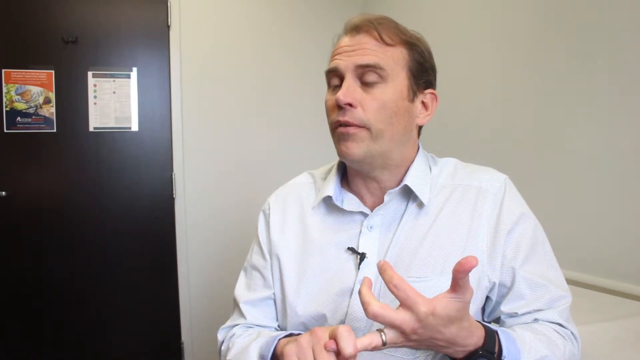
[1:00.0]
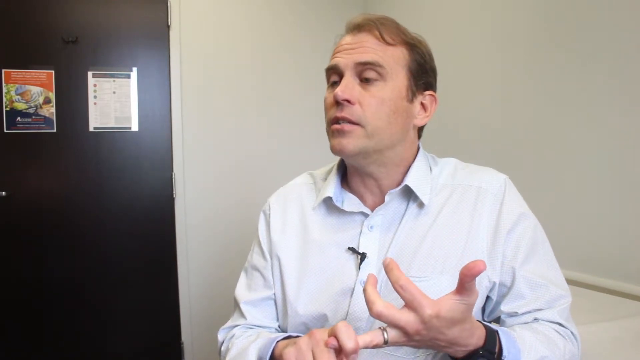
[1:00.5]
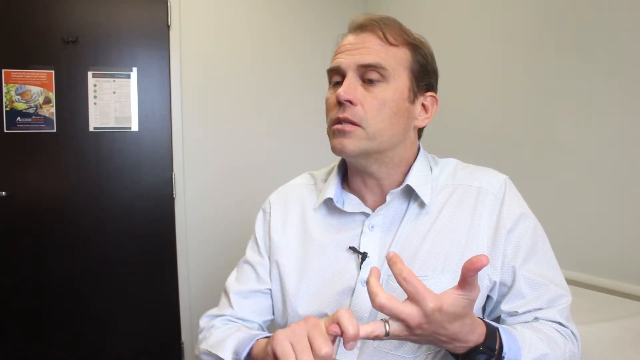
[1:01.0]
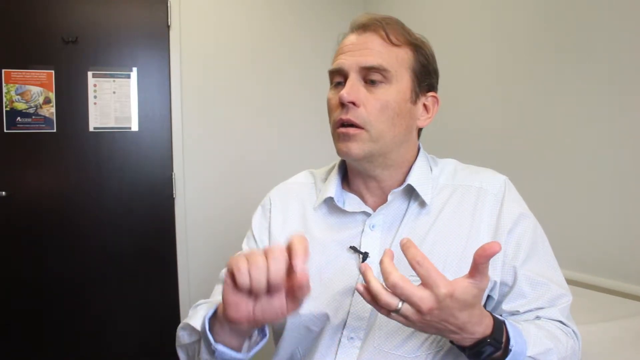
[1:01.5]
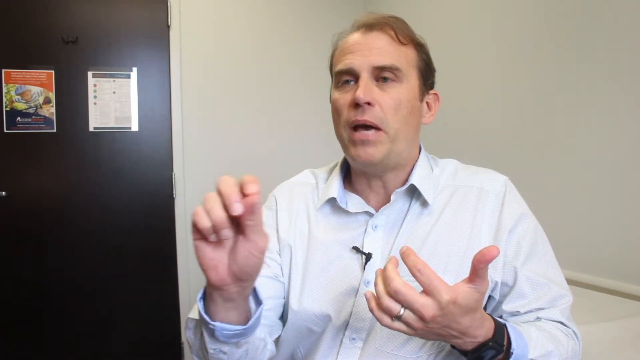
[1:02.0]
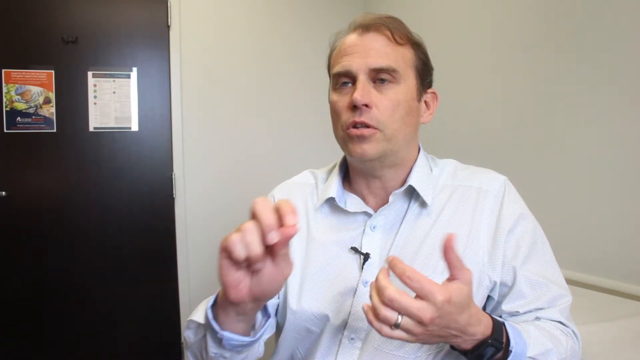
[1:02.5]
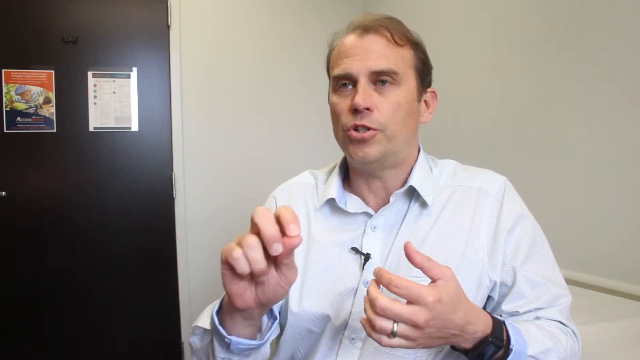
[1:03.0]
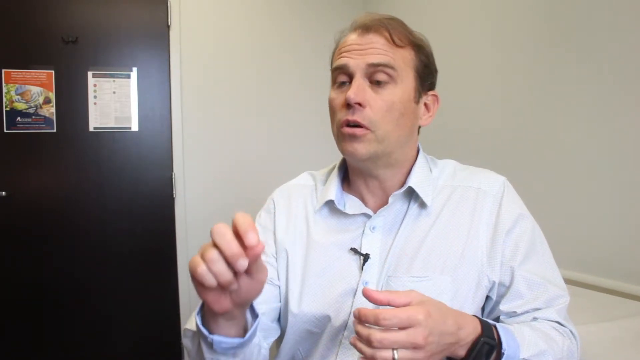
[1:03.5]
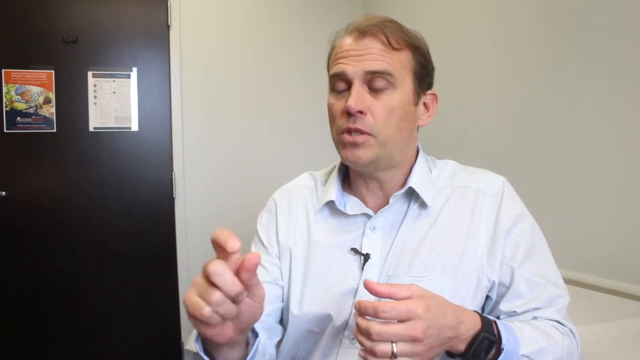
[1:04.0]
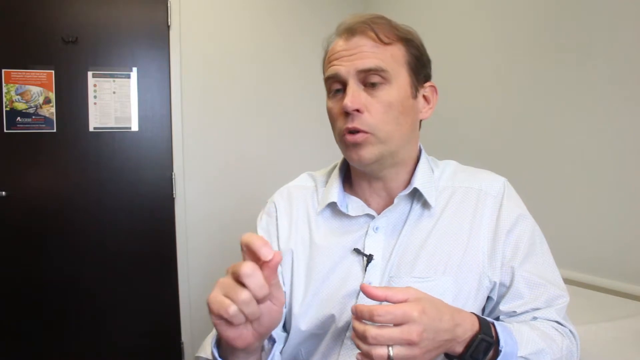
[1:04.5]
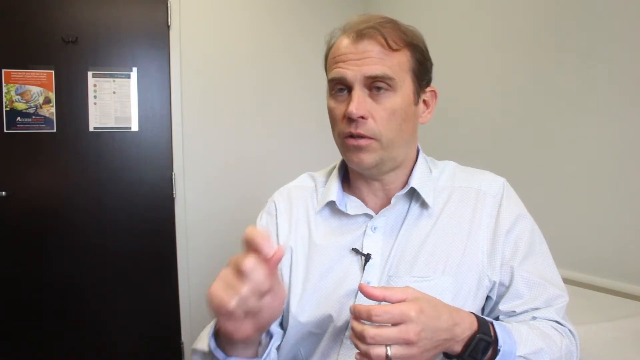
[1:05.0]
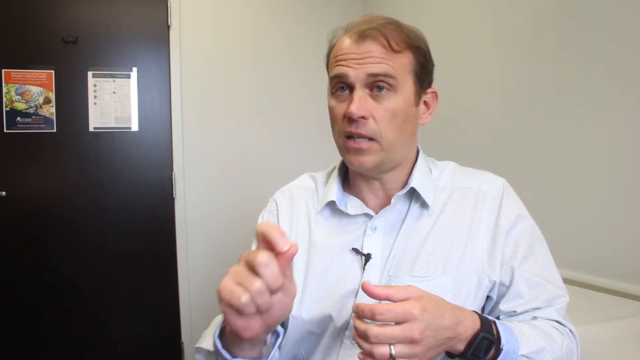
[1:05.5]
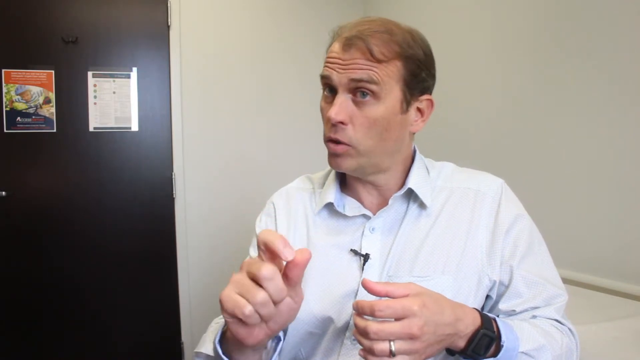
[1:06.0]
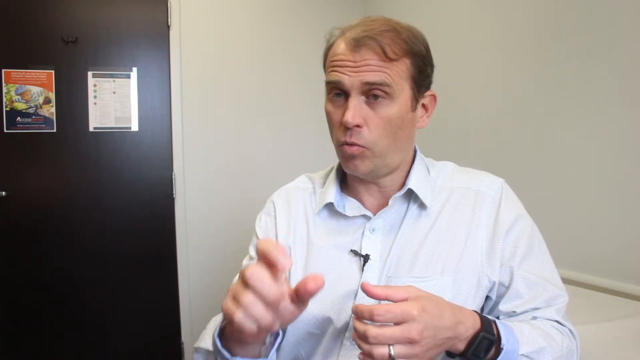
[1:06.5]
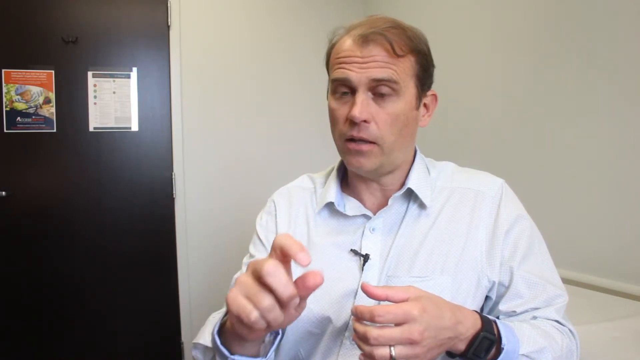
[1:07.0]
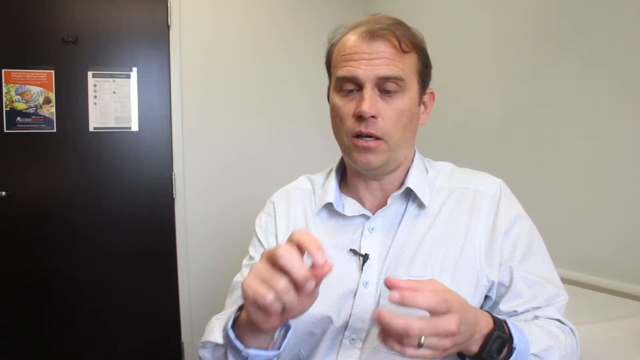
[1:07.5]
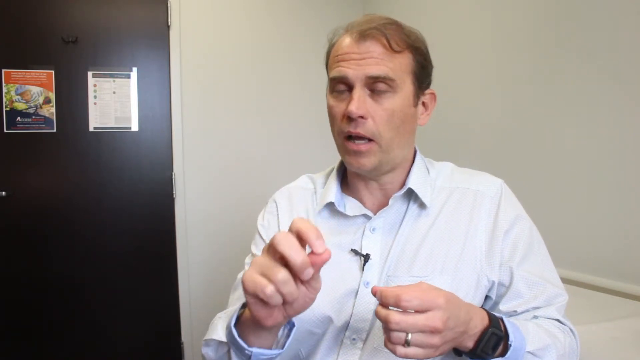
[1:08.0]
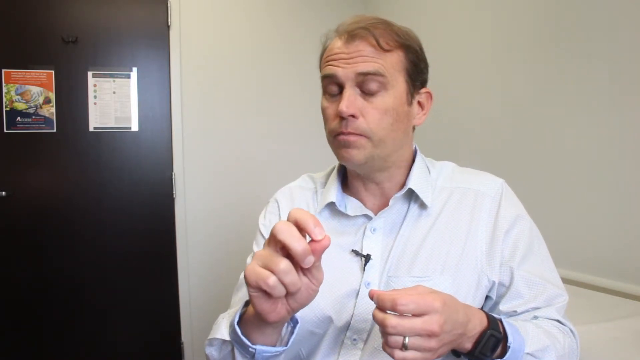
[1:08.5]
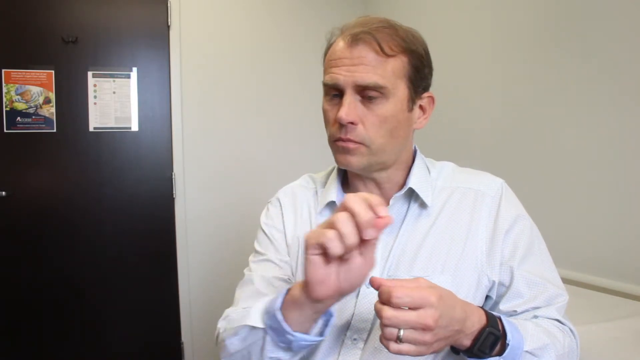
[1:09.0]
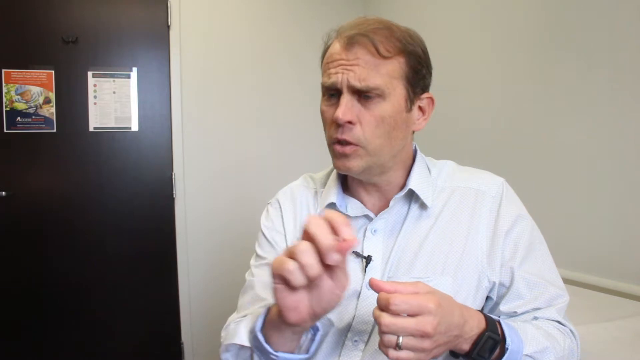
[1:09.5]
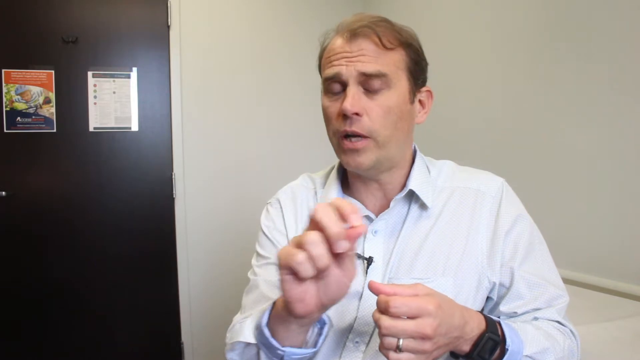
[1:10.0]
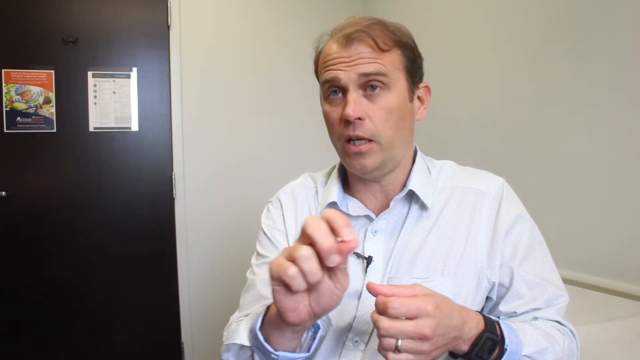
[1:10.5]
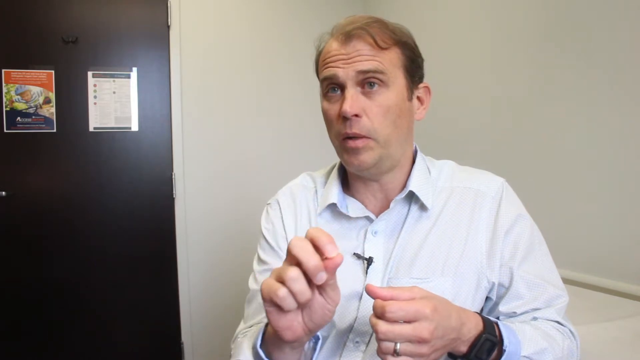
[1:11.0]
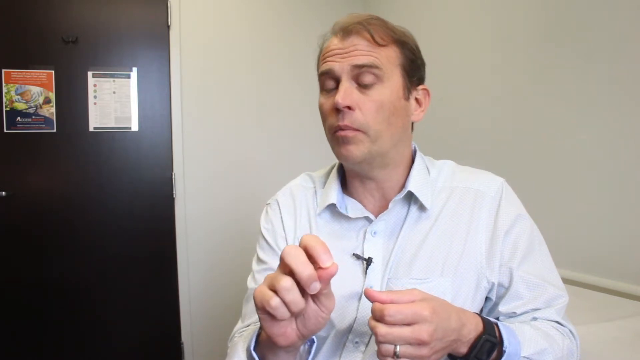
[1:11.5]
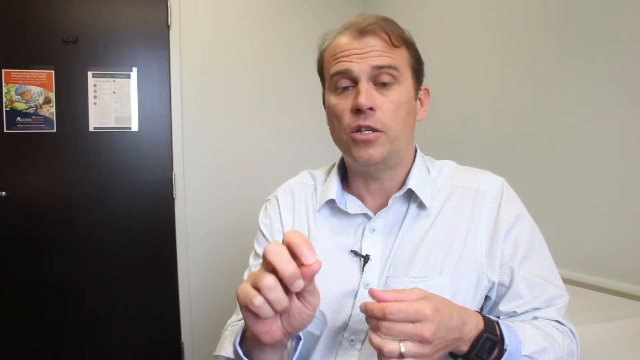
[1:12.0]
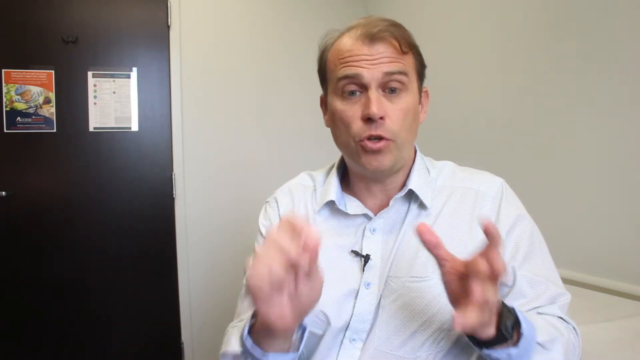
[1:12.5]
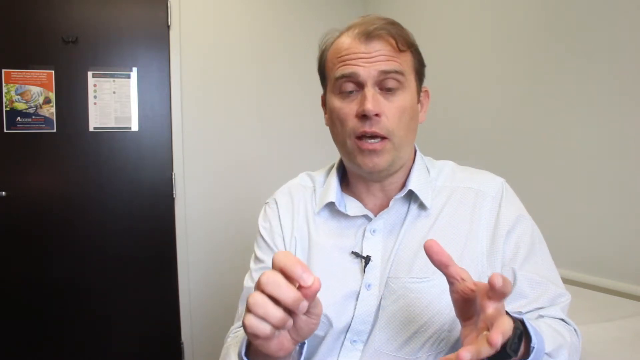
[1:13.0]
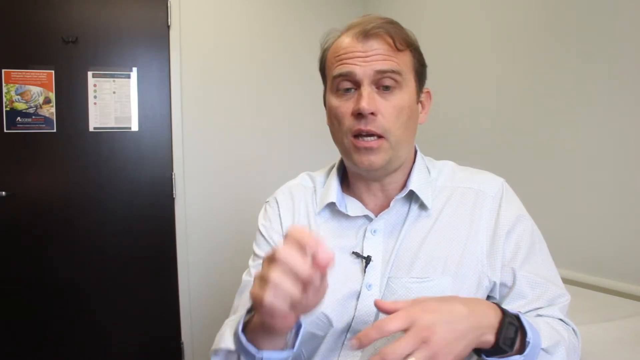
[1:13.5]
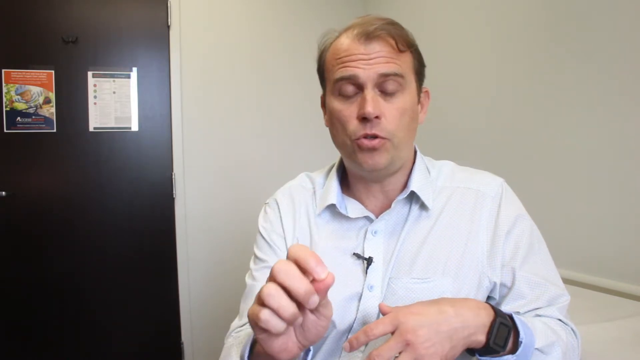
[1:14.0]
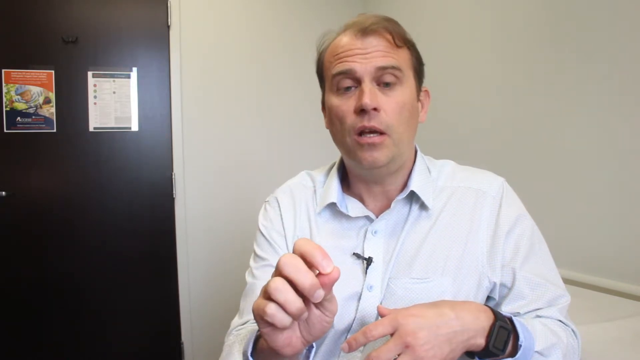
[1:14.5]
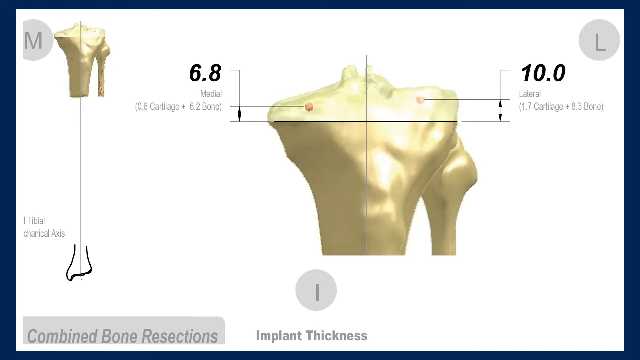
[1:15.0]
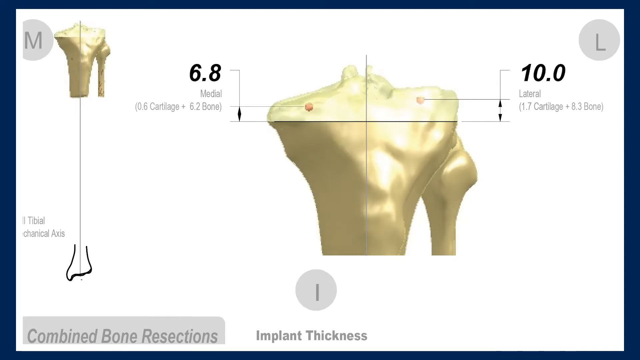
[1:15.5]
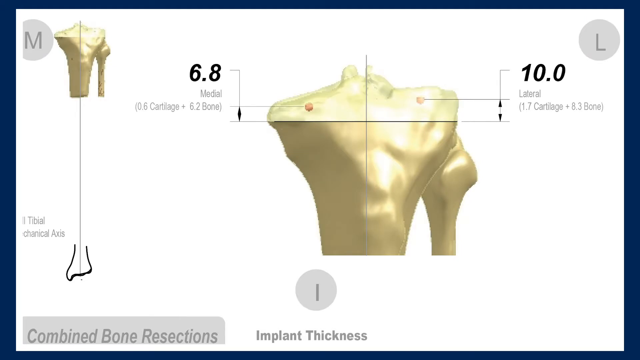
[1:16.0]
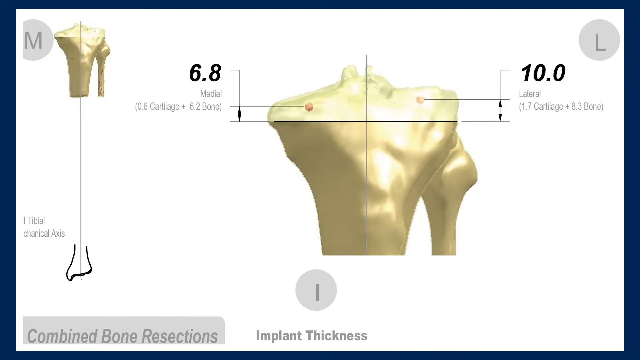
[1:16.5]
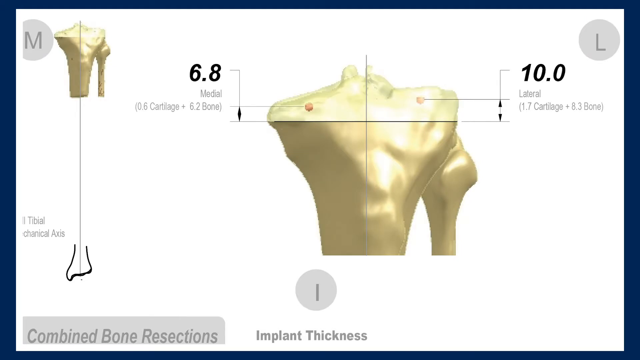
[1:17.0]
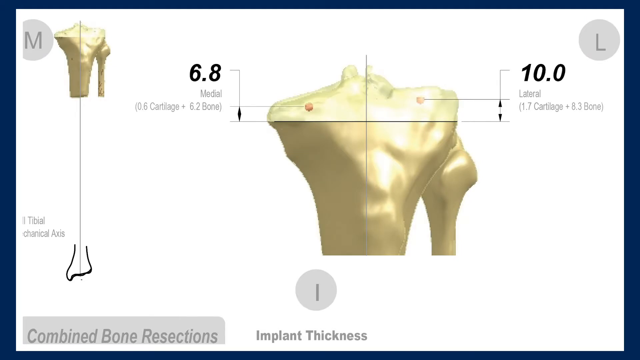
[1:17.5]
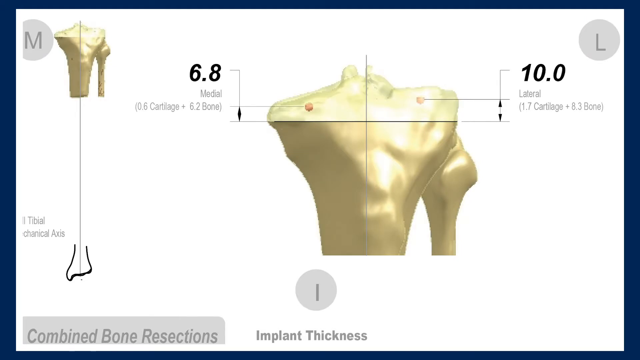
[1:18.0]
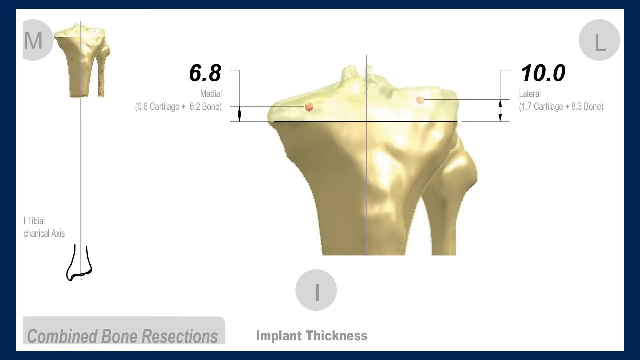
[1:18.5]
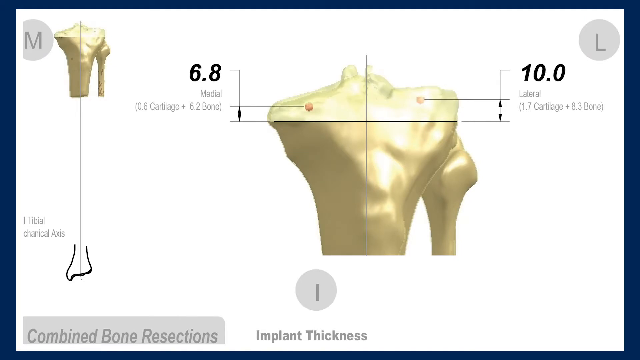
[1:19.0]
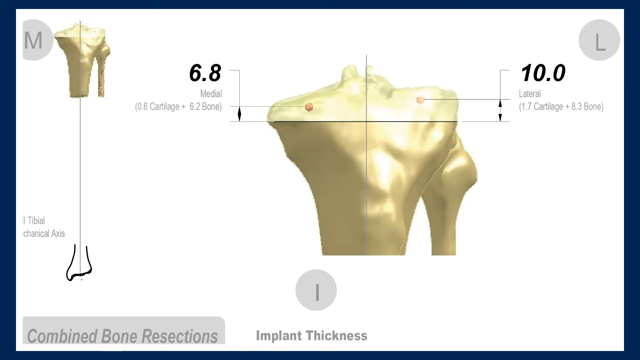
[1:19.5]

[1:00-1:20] The man moves his left hand up, palm toward the camera, fingers tucked in toward the palm. His other hand has the back of the fingers toward the camera, the tops of the fingers pointing somewhat up and slightly toward him. He moves his left hand up to about chest height and moves it back and forth with his pointer and middle fingers on his thumb, looking down to the left. He somewhat relaxes his right hand, and now only his pointer finger is on his thumb, the other fingers tucked in, facing the camera as he moves his hand forward and back. He turns his head a little to the left as he separates his pointer finger from his thumb, then closes them back together while looking down at it. He moves the hand pretty far over to the right and brings it back in front of his left shoulder as he talks, moving it back and forth and looking up and down. He opens his right hand, the back of the hand toward the right side and fingers toward the front, then somewhat relaxes it back and down in front of him. The video cuts to another diagram of the bone and the joint on a white background. In the center it is somewhat wide, almost looking like a torso, and down the right side a bone is attached to it, with numbers and words beside it. The diagram looks somewhat goldish.